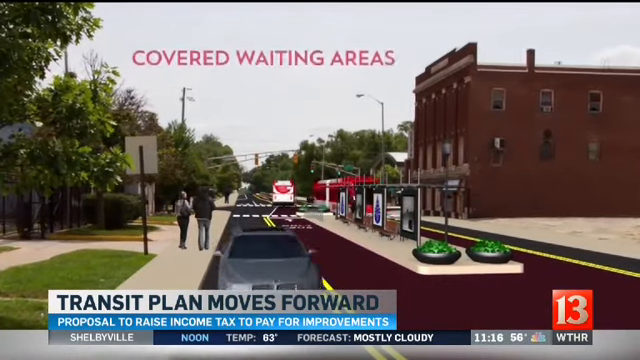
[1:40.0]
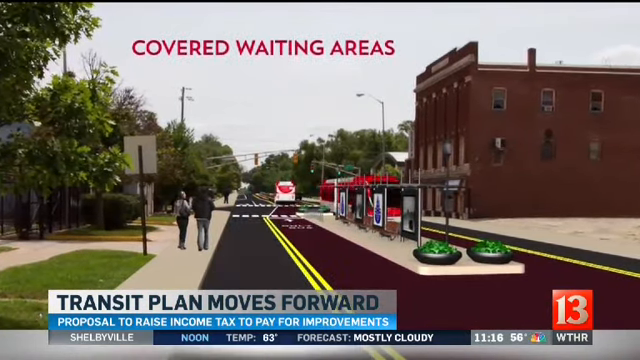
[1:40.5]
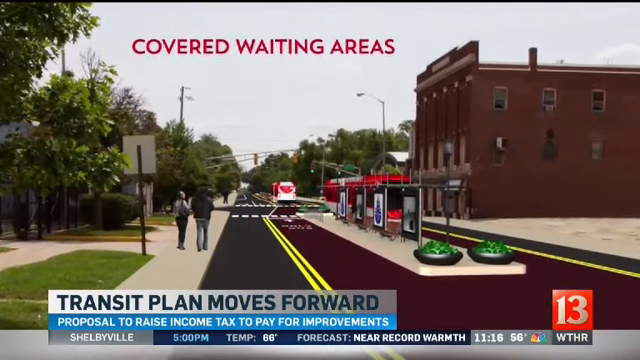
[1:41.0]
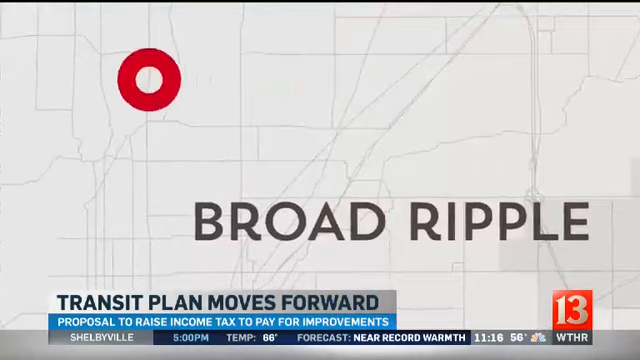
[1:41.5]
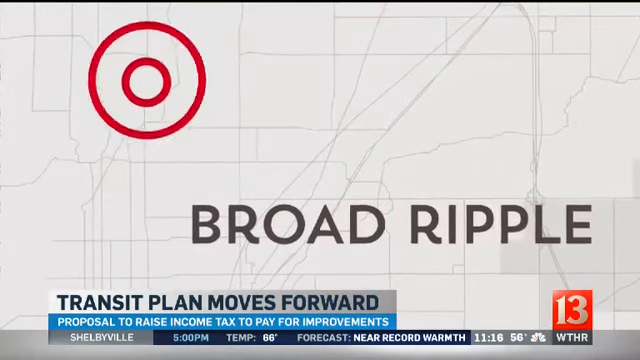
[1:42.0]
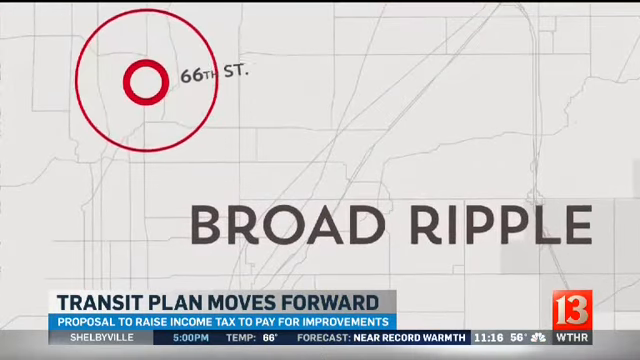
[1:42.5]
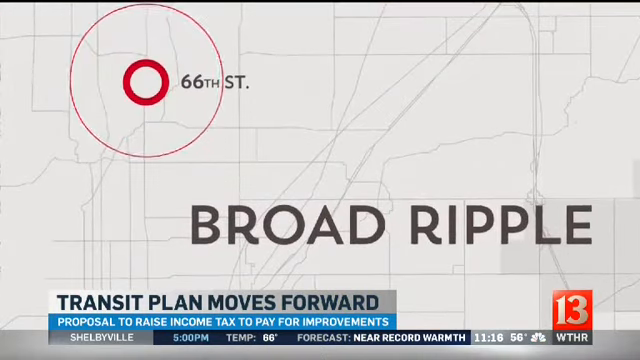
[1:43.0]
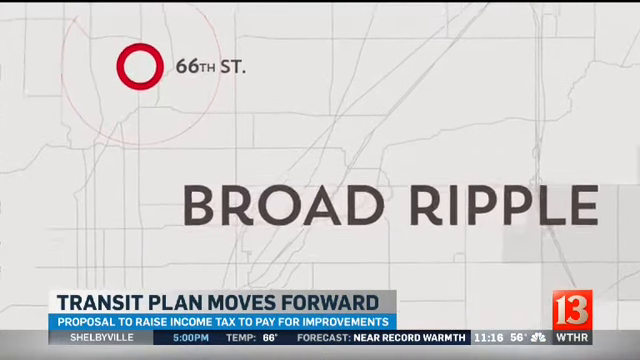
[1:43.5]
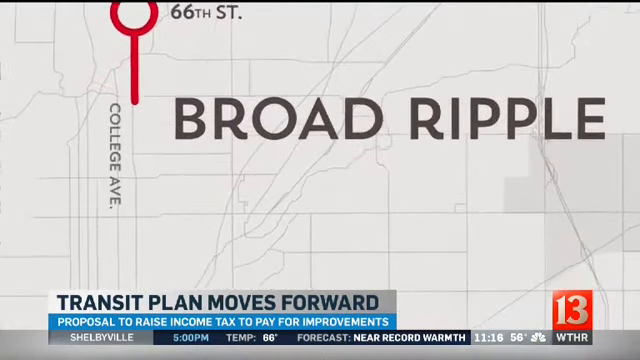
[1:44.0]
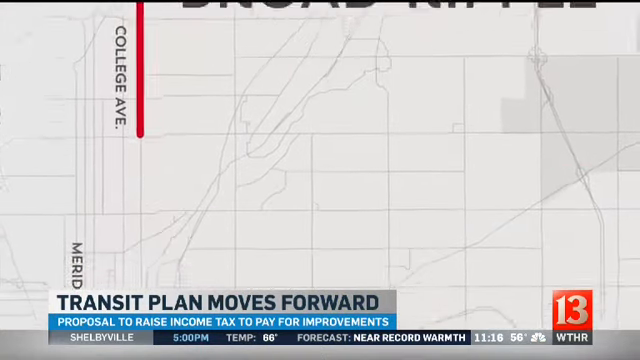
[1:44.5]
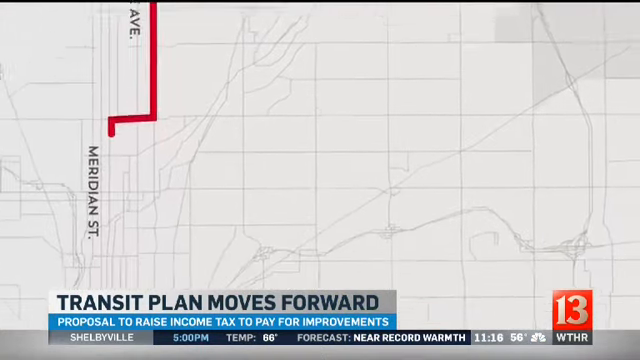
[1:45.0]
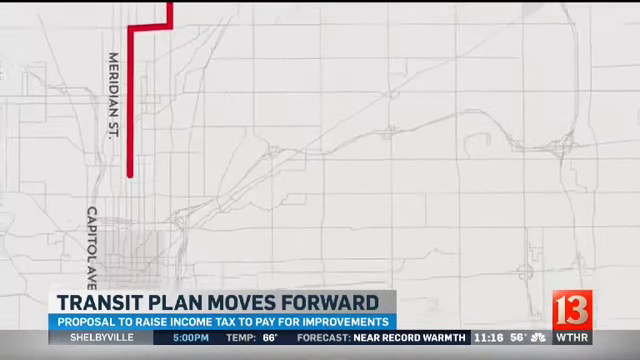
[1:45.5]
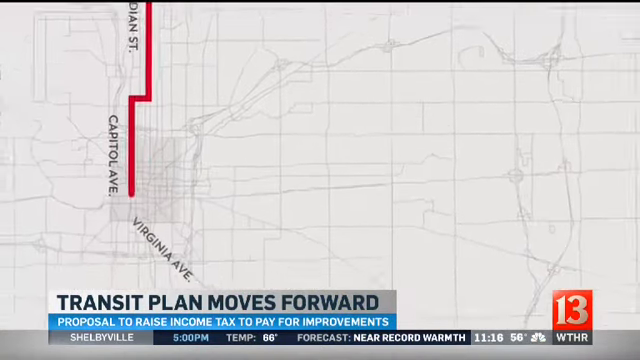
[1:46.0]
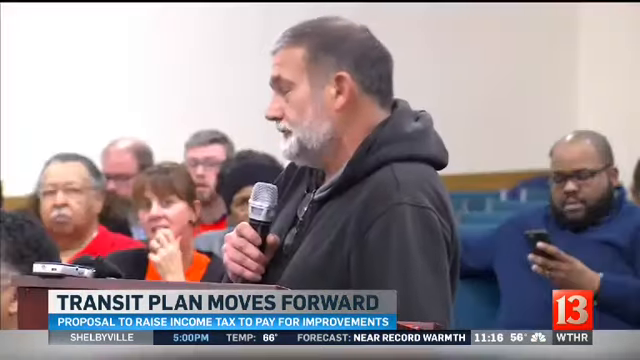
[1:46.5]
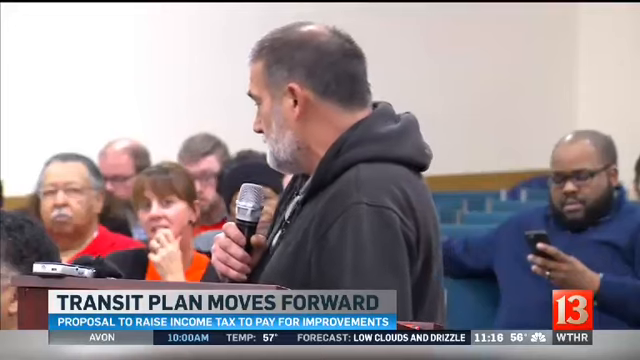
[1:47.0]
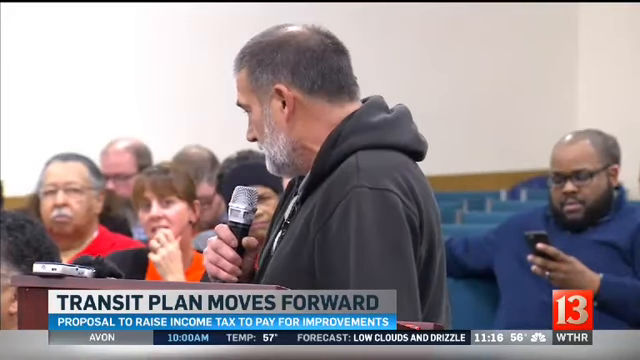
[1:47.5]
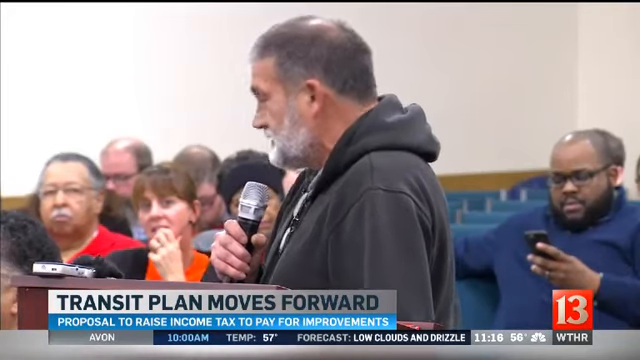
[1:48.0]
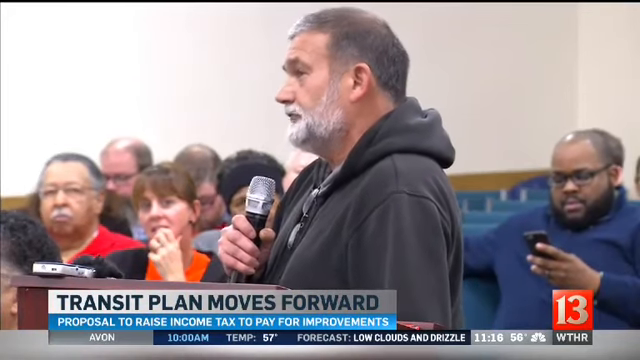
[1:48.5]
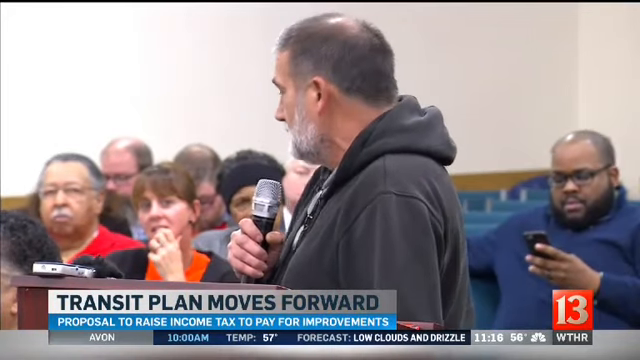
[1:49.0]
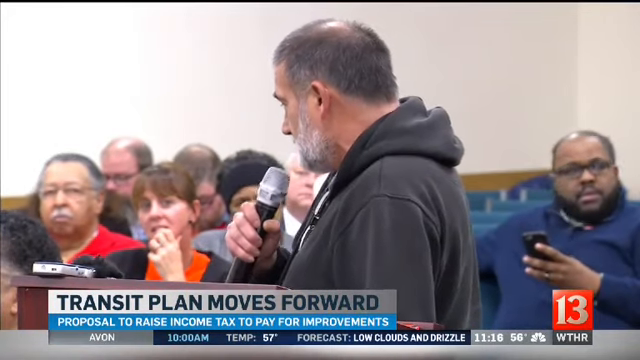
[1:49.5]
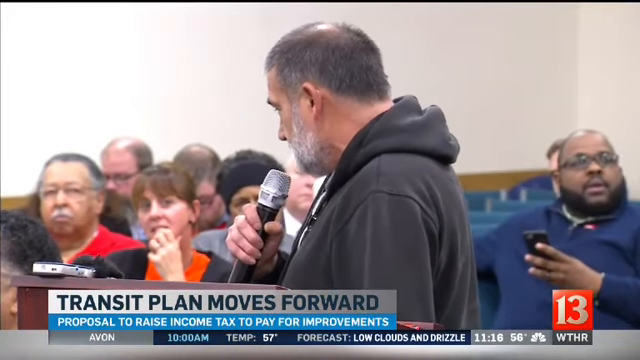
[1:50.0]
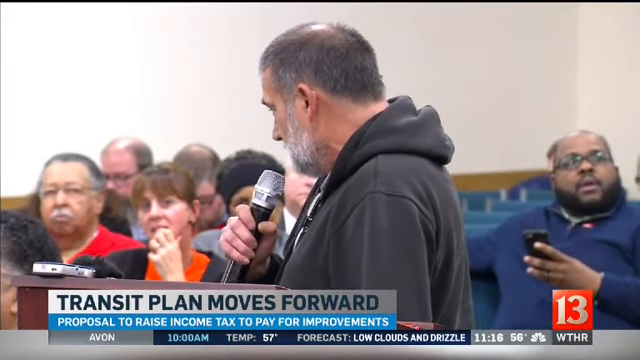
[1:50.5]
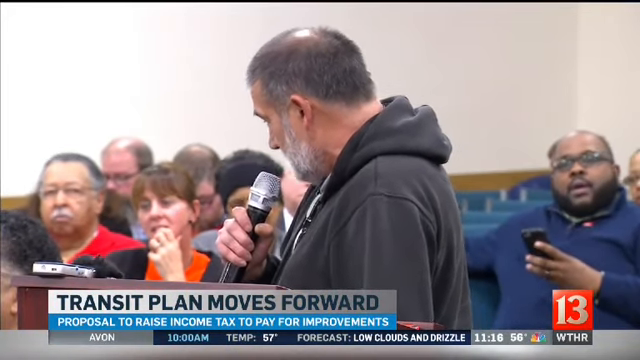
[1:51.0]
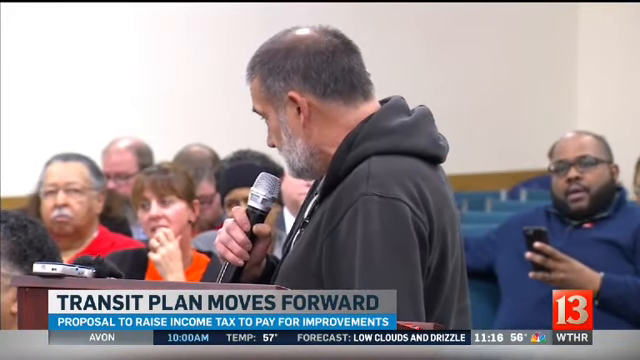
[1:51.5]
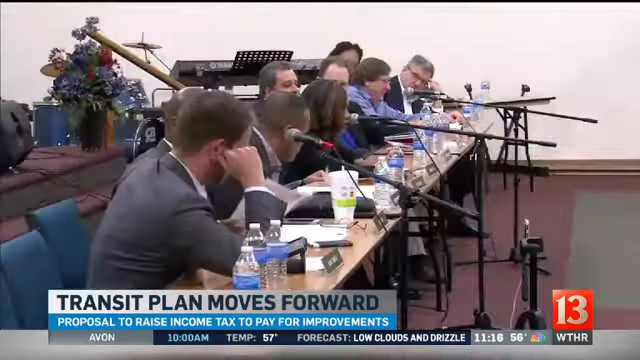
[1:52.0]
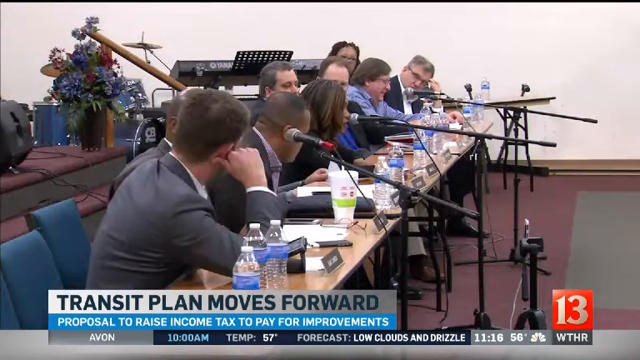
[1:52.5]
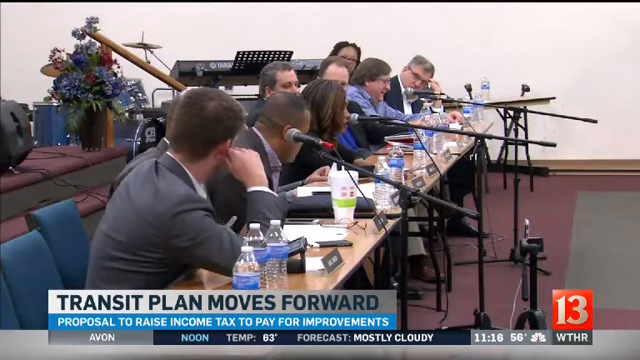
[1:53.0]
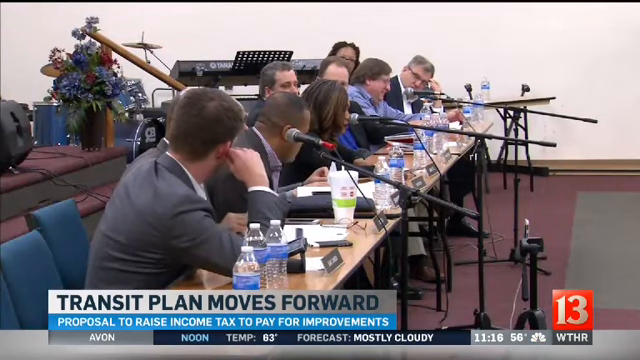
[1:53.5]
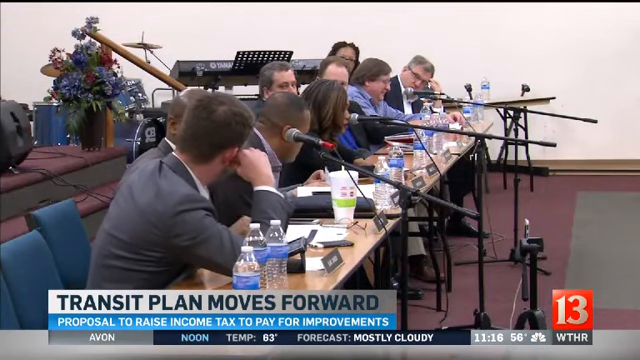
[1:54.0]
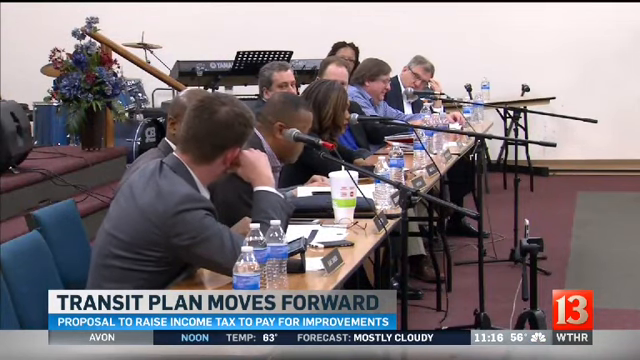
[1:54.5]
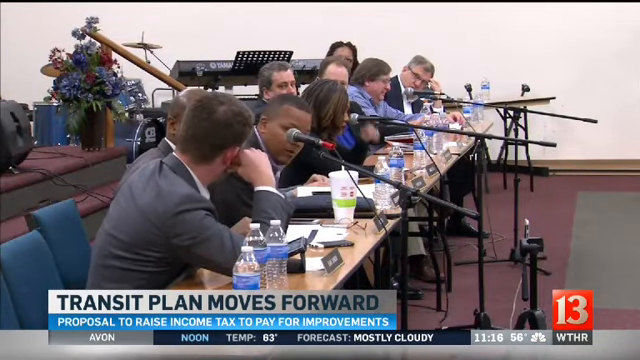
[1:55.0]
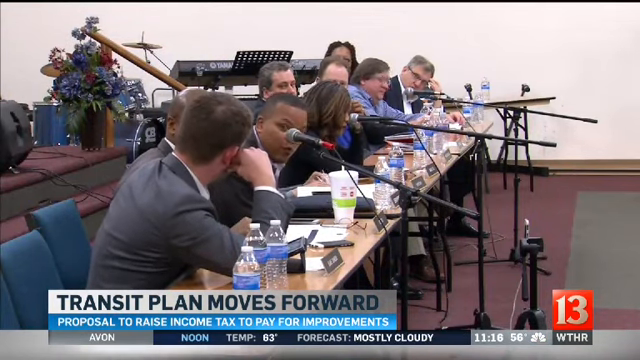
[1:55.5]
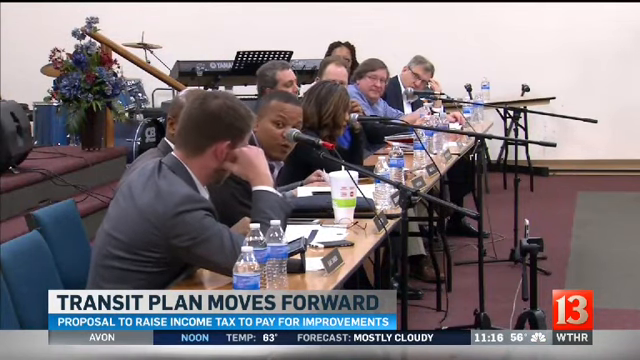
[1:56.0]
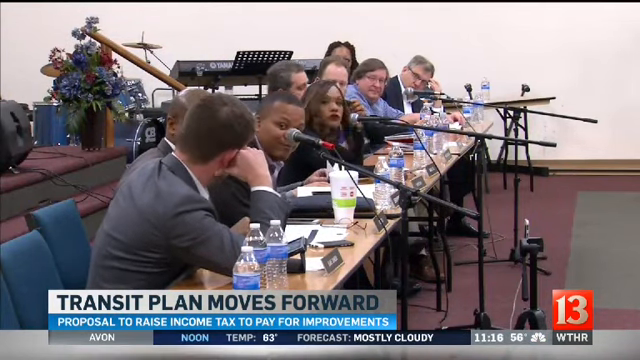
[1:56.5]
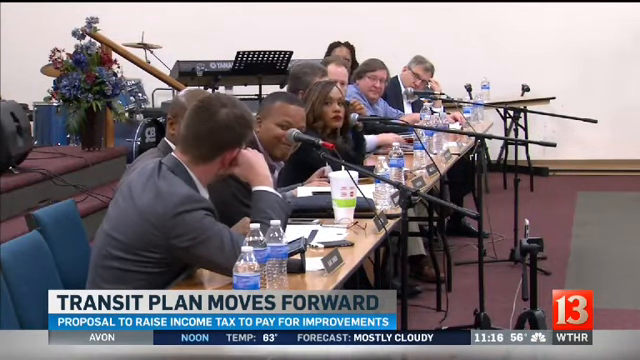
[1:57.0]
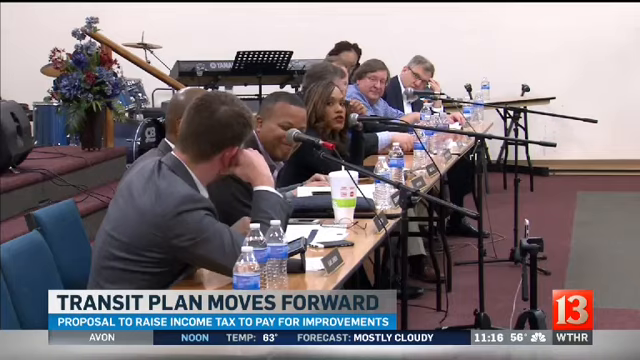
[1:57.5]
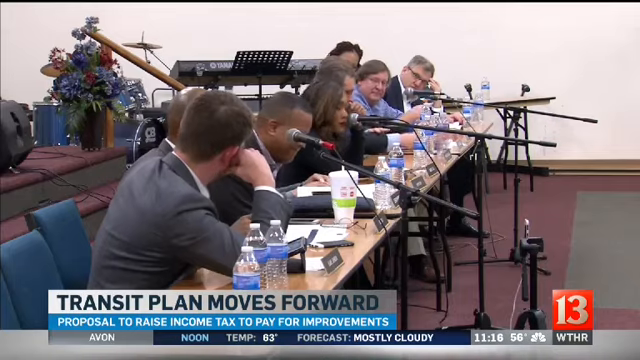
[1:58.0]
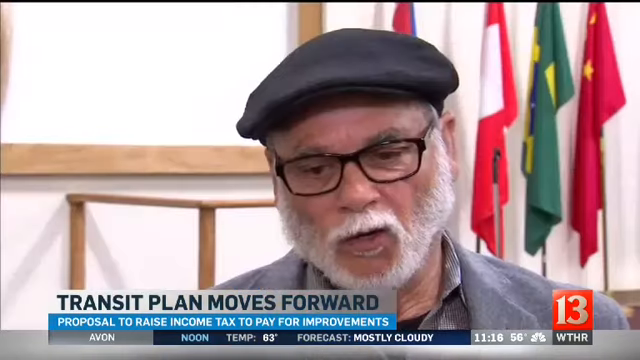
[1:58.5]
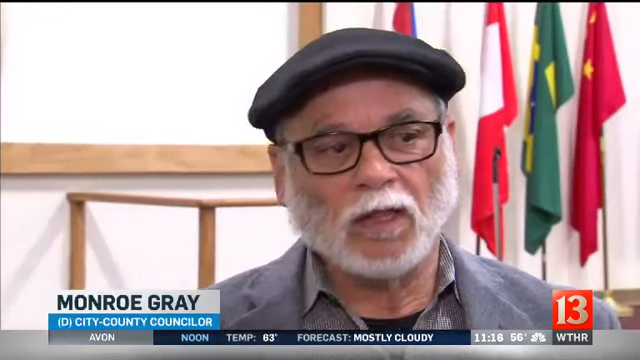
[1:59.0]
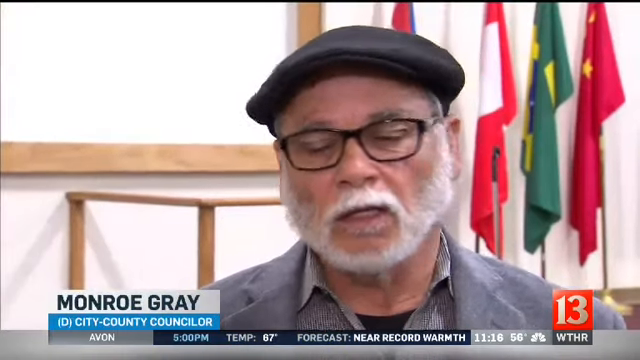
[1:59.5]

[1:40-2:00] In a CGI video, an orange square with "13" in white is superimposed on the lower right-hand corner, and the bottom says "transit plan moves forward" and "proposal to raise income tax to pay for improvement". A bus goes one way through a city while another bus comes the opposite way, and pink text at the top says "covered waiting areas". The image moves to what looks like silver outlines of part of a map, still with "transit plan moves forward" and the 13 in the corner. A pulsing red circle has another red circle in the middle, with "broad ripple" in large gray text. The circle then suddenly becomes just the little circle, with "66th street" next to it and a line extending all the way down, going through part of the lines on the map through a city. Footage of a meeting follows: a bunch of people watch a balding man in a big black hoodie who holds a microphone in his hand, with "transit plan moves forward" and the square with 13 still on screen. A bunch of people at a table, all wearing suits, have microphones in front of their faces and are talking and smiling. A man with a short gray beard, a blue shirt, black glasses and a black newsboy cap appears. Behind him are multiple flags of different colors folded on a stand: a red one, a red and white one, maybe a green and yellow one, and possibly a blue one. White text says the man's name is "Monroe Gray".